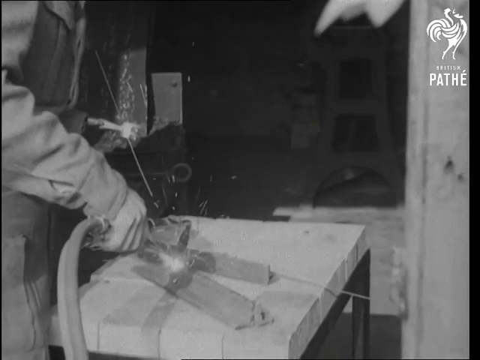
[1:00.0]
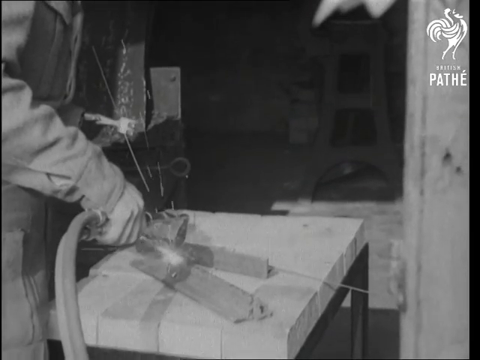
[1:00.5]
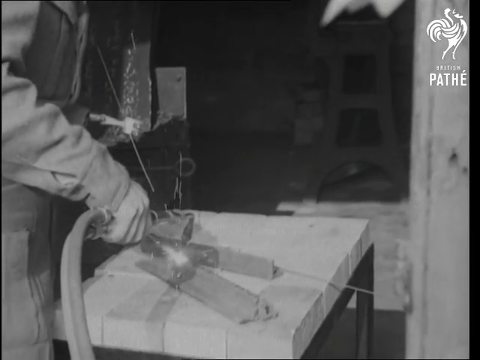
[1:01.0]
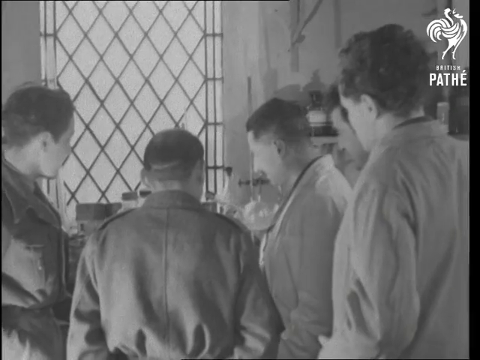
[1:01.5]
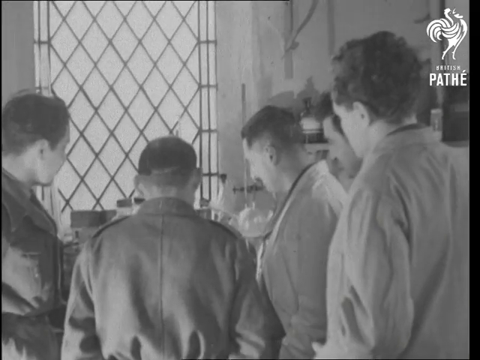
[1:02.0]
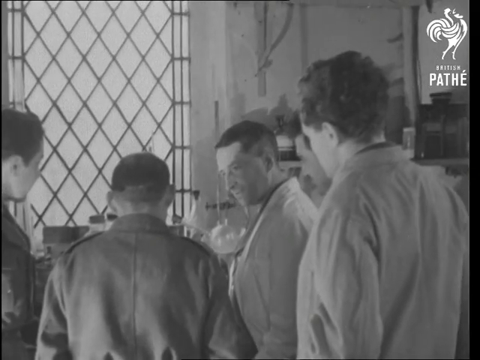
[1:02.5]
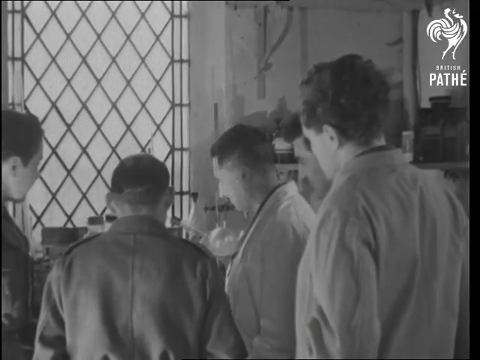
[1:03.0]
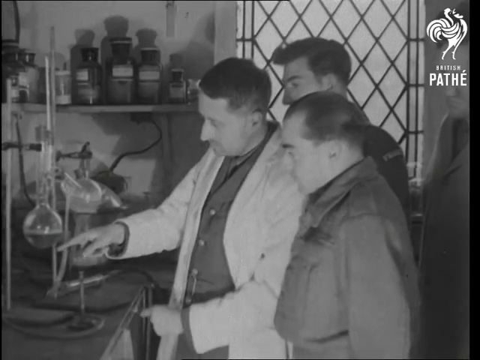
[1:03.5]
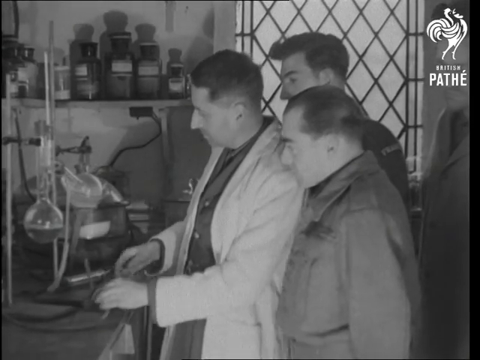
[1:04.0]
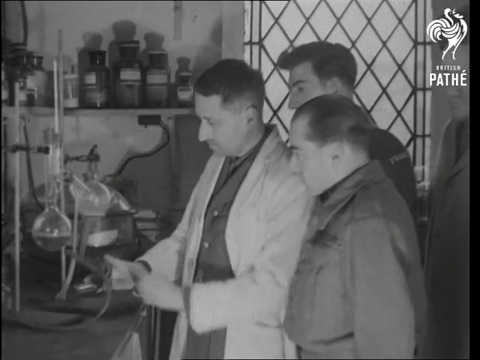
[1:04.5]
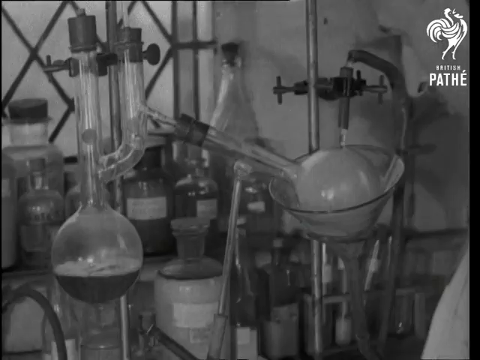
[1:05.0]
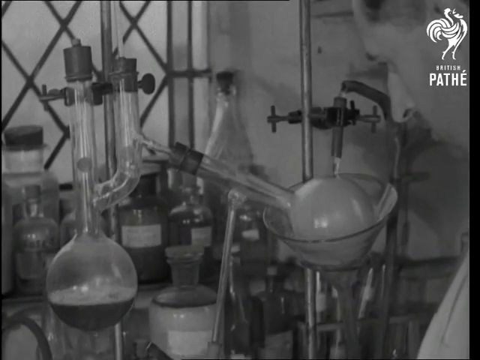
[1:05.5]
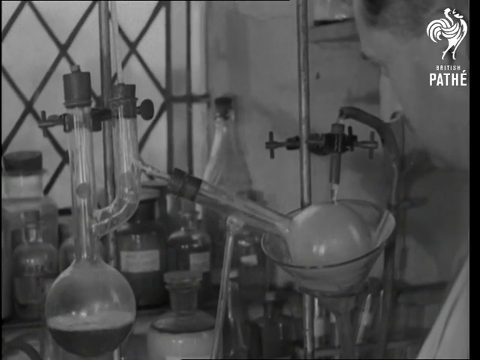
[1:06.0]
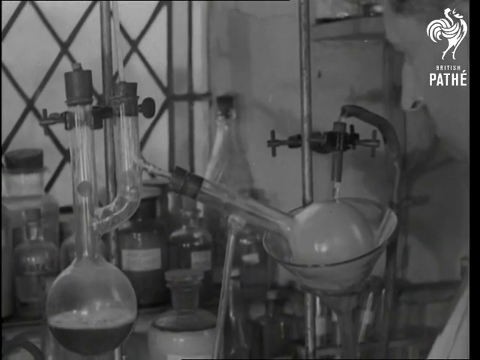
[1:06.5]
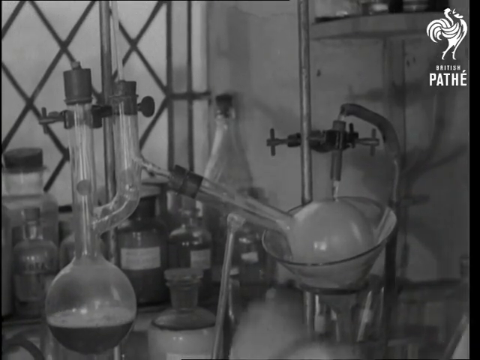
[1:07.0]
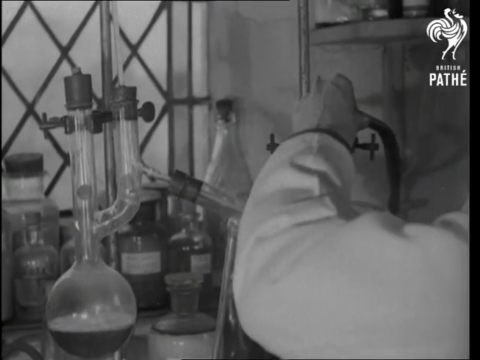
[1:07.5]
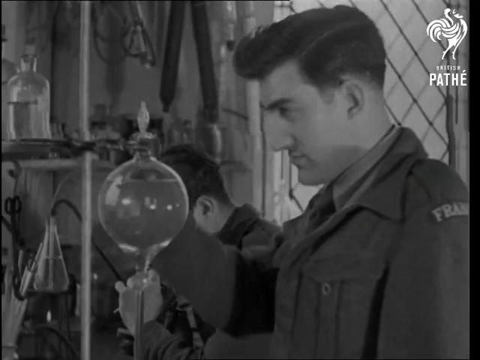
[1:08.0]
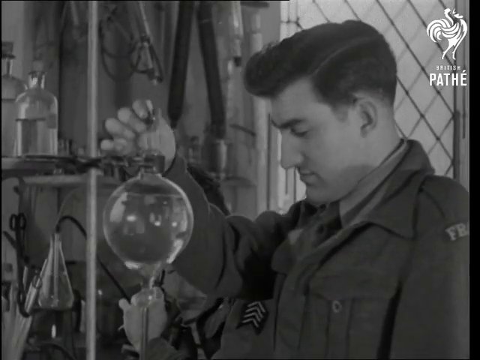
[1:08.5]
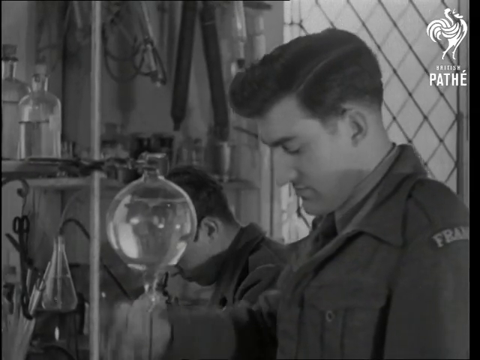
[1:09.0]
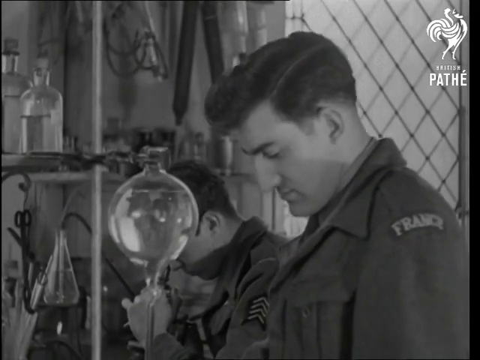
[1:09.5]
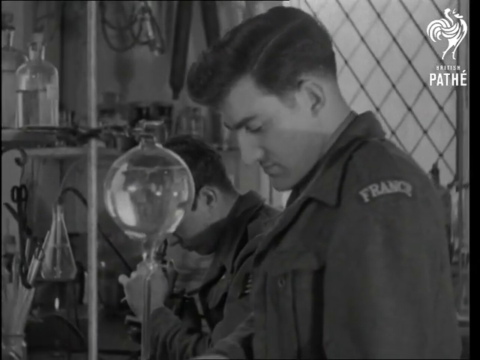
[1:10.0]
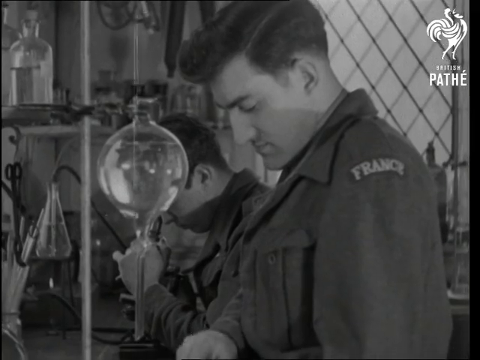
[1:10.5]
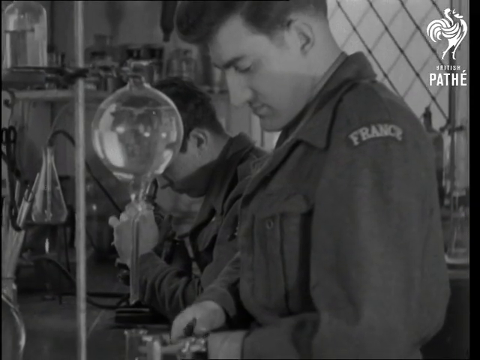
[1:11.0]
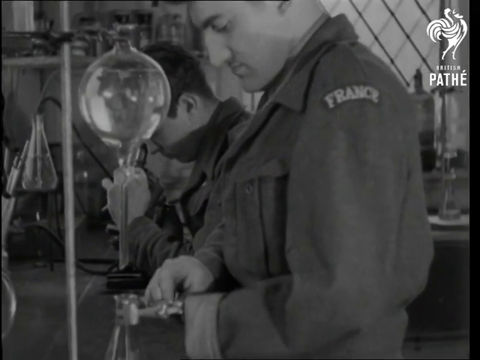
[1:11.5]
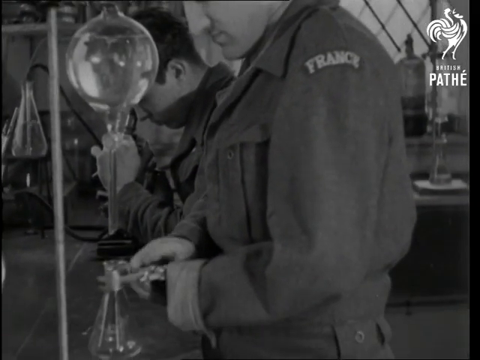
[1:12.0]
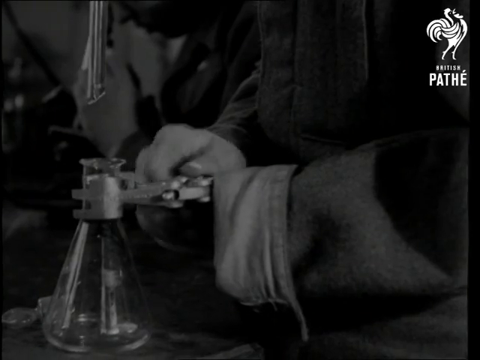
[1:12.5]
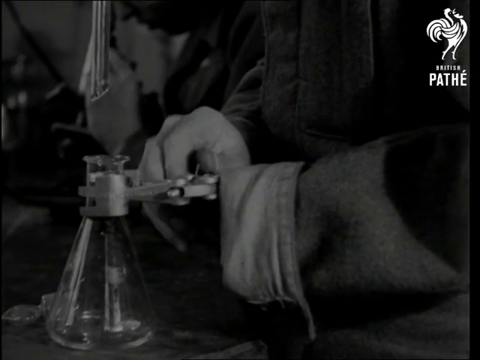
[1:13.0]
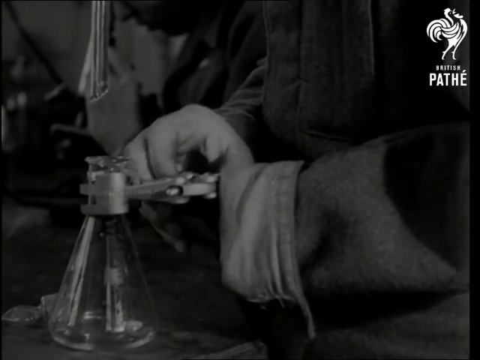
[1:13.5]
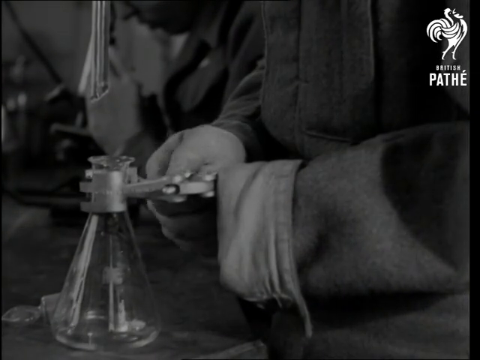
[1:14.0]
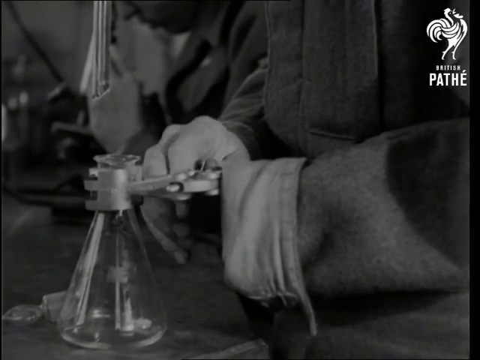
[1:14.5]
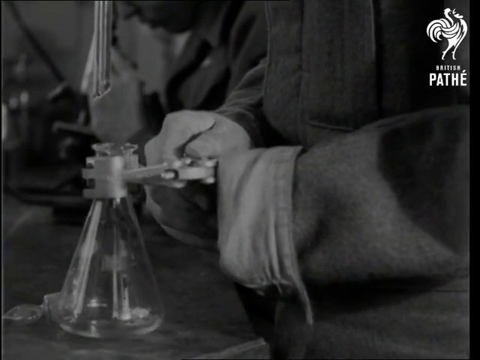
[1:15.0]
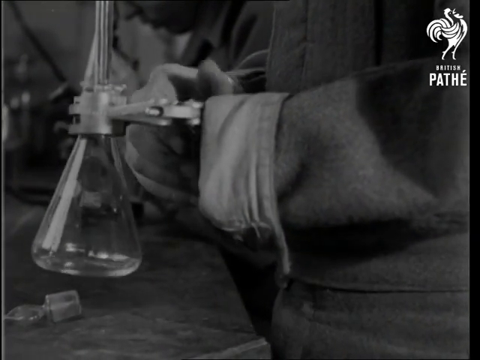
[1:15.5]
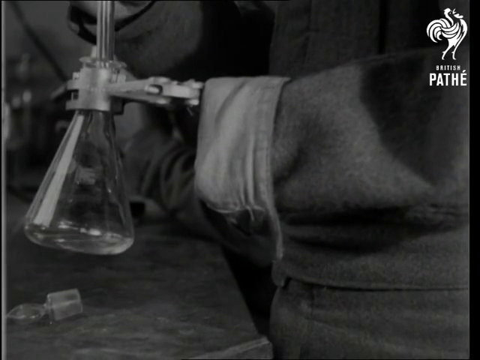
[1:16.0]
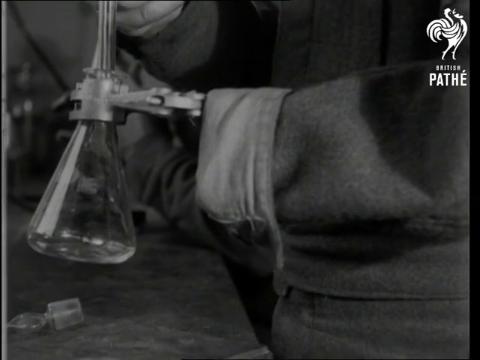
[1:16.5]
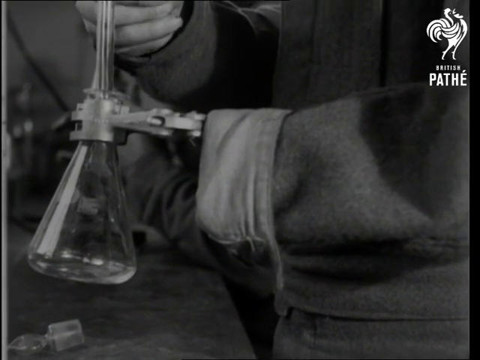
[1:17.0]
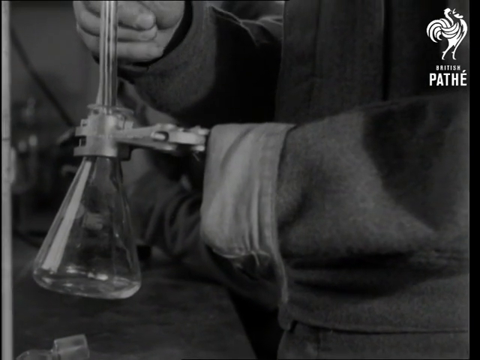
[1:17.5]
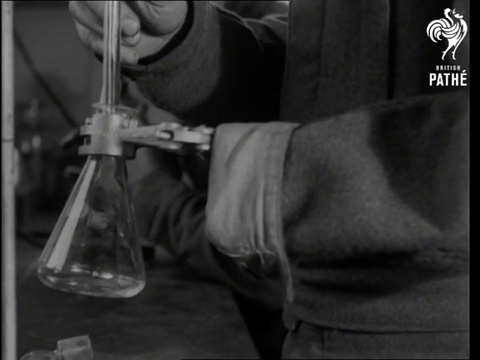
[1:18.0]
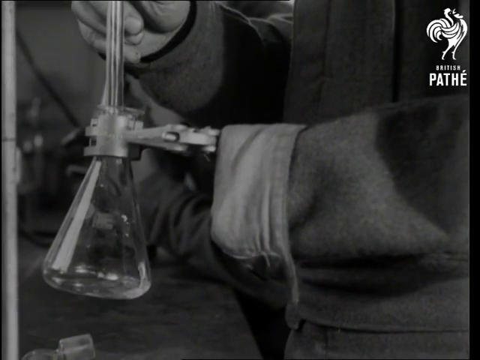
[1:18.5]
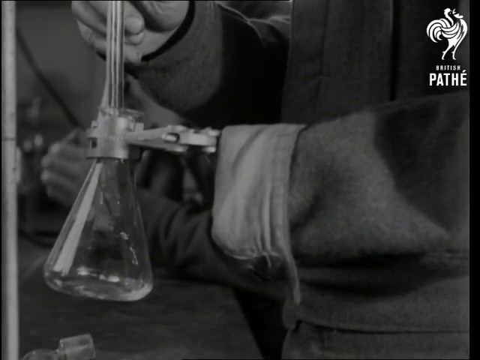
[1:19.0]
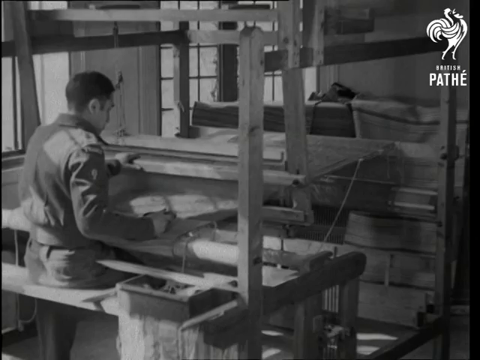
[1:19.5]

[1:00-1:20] A zoomed-in shot shows the blacksmith or welder working in his shop. As the camera zooms out, five men interact in some type of lab. At least two of them wear long white lab coats, while the others wear the same darker coats, with at least one having the France logo on the shoulder. Different lab utensils are visible, and one person leads some type of demonstration while two others look on over each shoulder. A shot of the lab demonstration shows different liquids and gases in different utensils. The man with the France coat takes something off of one of the utensils and begins to twist it, then pours some type of liquid into the utensil he took off. Finally, a man in a different type of shop is shown with his back turned to the camera.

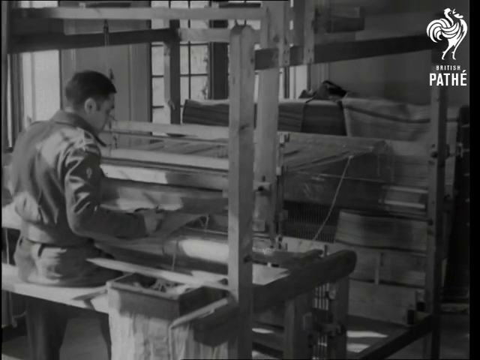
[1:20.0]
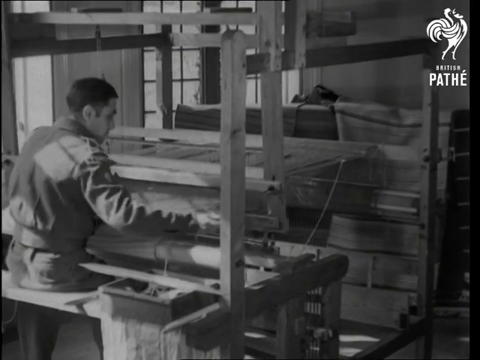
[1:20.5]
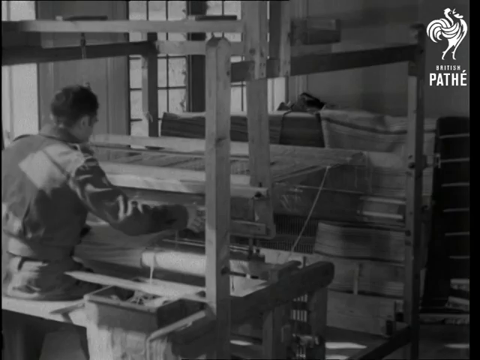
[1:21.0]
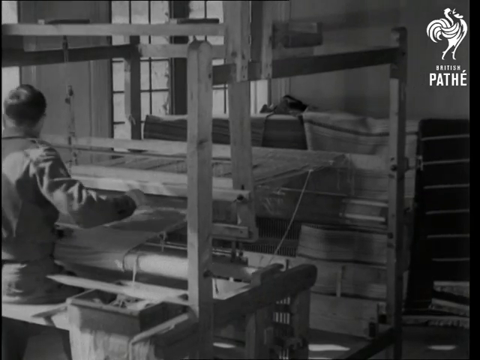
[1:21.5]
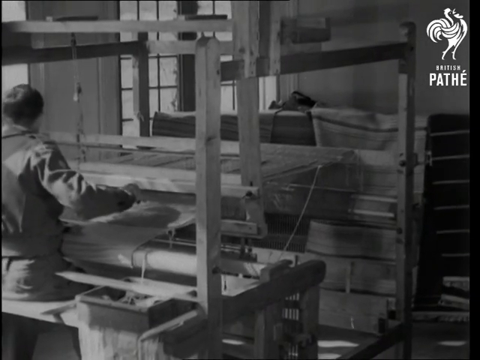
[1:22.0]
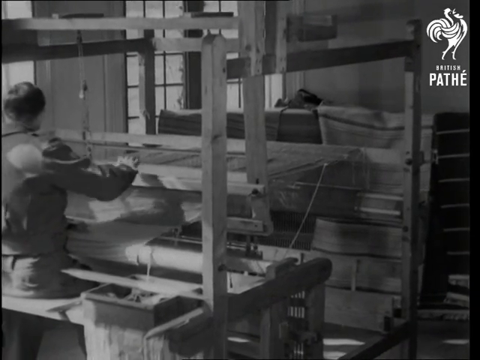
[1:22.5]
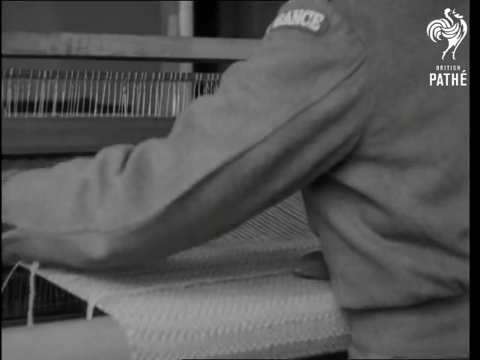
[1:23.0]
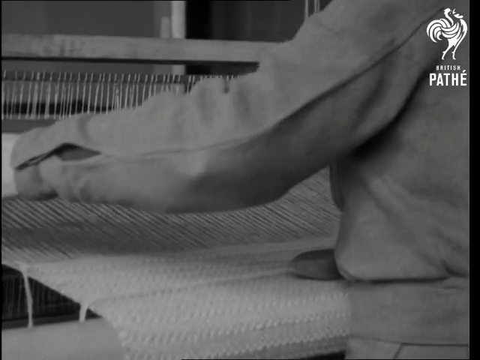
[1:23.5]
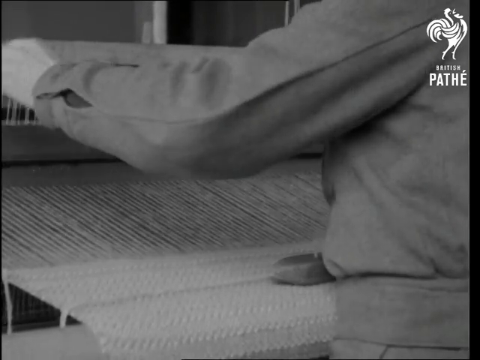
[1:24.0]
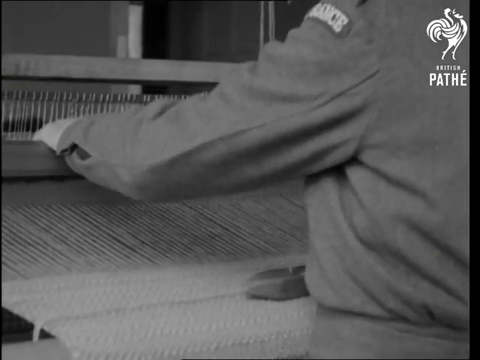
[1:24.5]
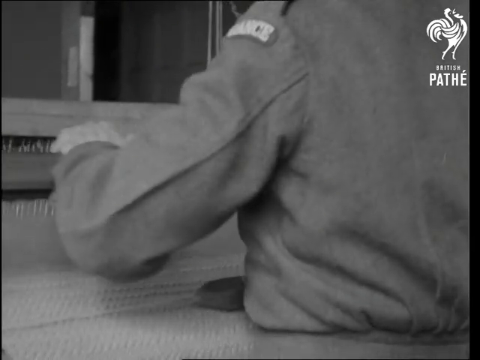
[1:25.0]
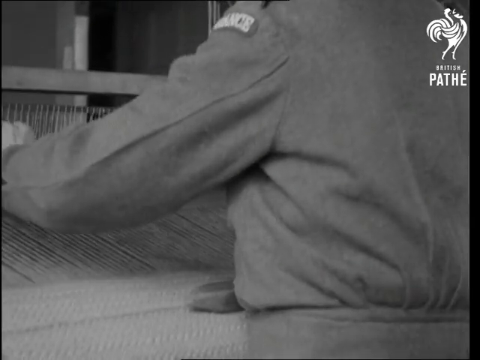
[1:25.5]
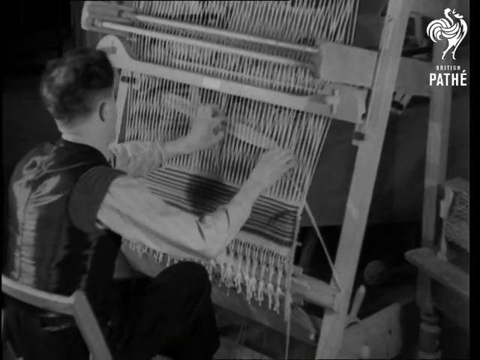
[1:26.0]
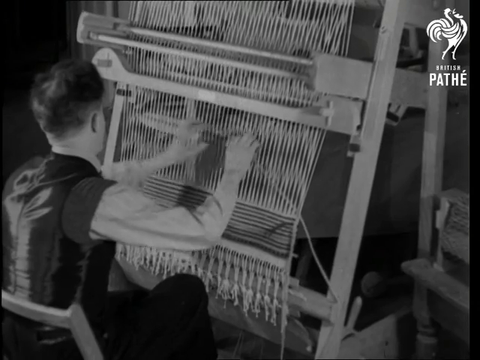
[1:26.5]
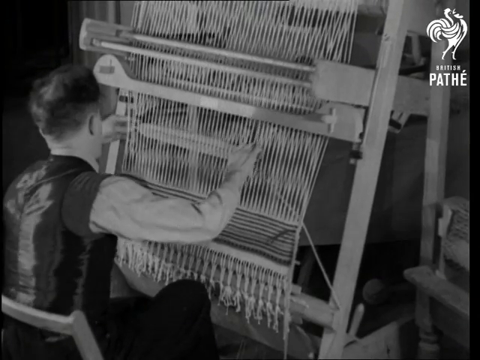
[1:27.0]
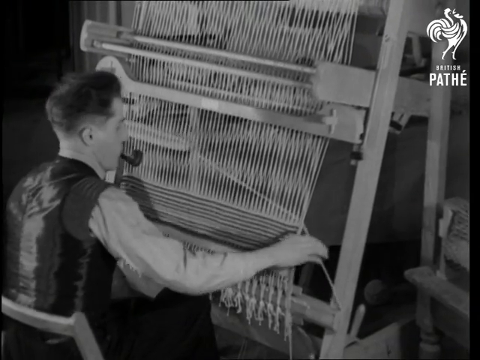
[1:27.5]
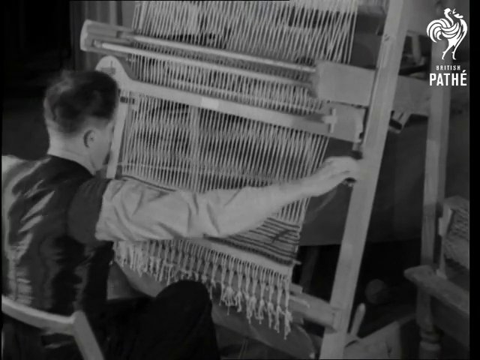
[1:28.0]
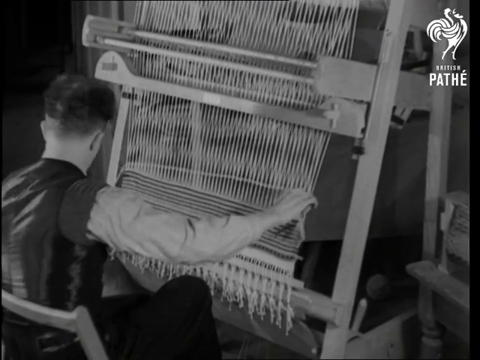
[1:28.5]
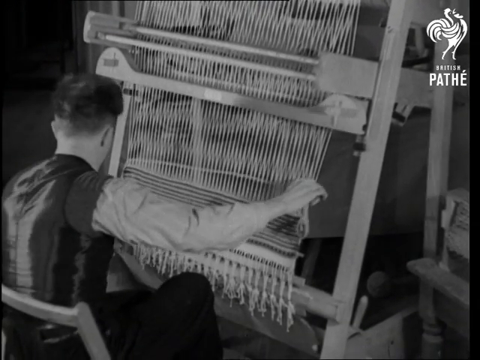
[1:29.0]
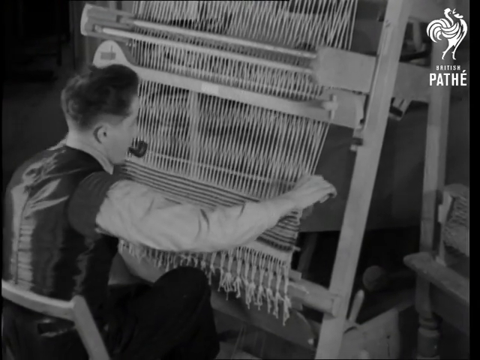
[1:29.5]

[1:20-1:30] A man appears to be doing some woodworking or carpentry. A zoomed-in shot shows he is using some type of sewing device. A different man, with a pipe in his mouth and a vest on, has his back turned to the camera and uses some type of sewing device; he appears to be stitching a blanket or a rug. He has a long string in his hand and pulls it through the different threads on the blanket or rug.